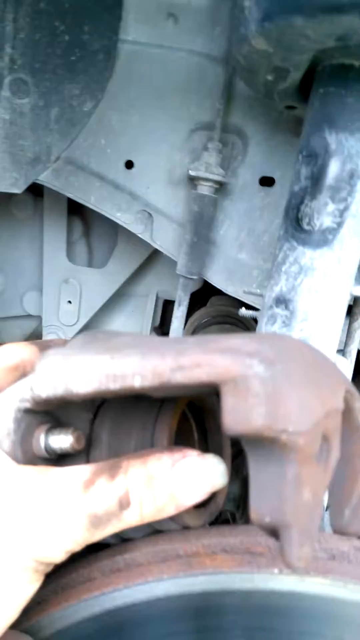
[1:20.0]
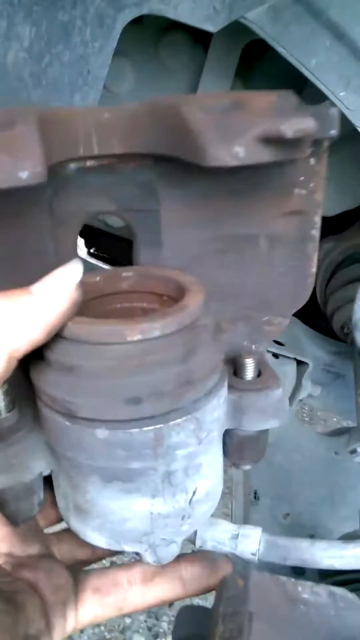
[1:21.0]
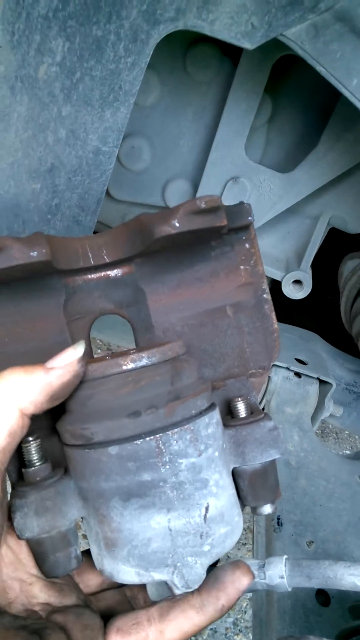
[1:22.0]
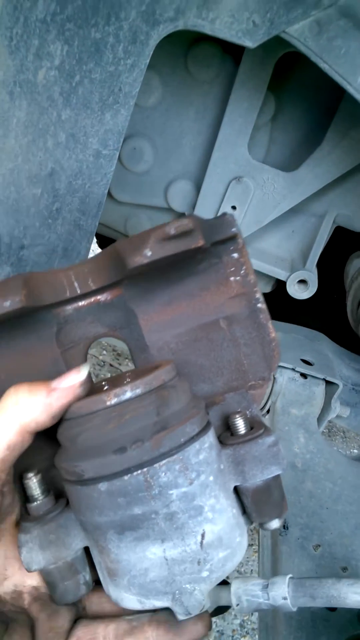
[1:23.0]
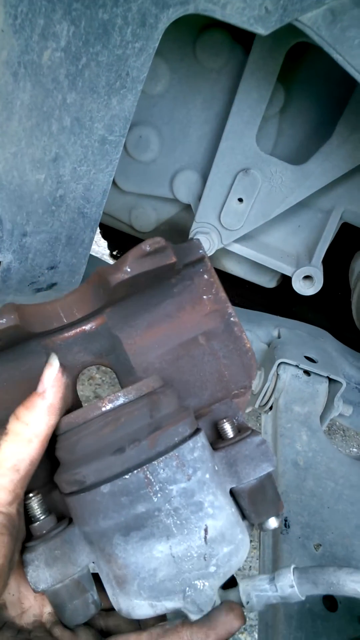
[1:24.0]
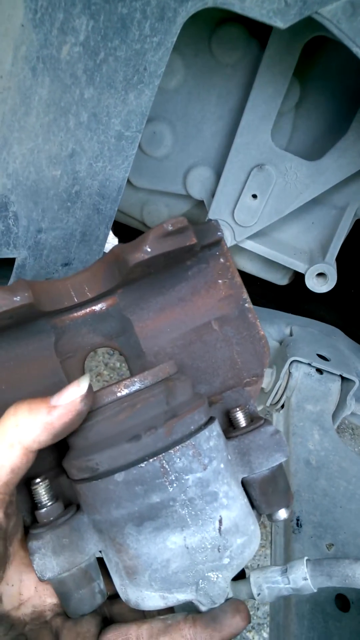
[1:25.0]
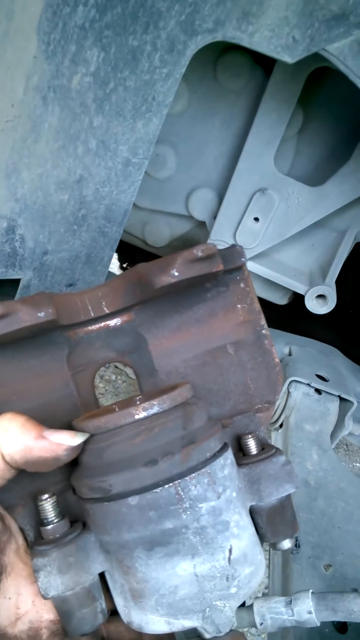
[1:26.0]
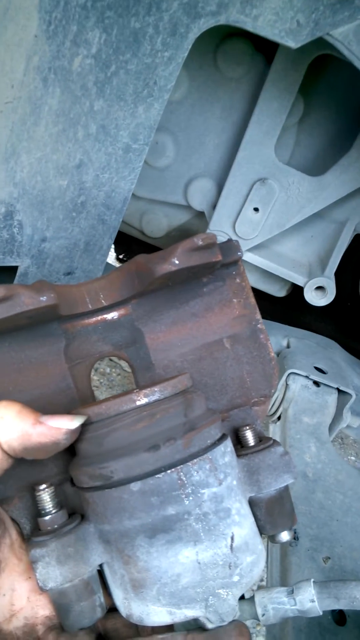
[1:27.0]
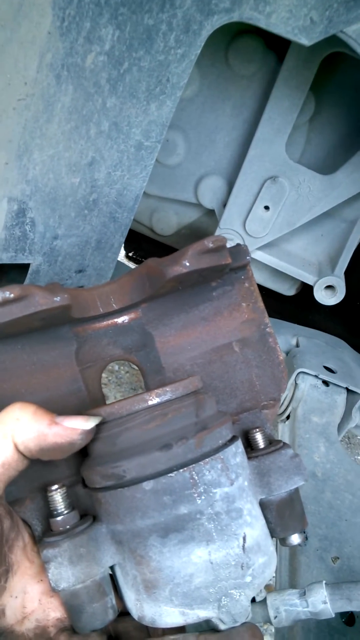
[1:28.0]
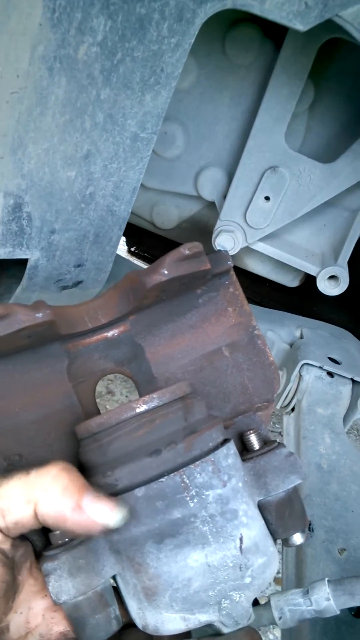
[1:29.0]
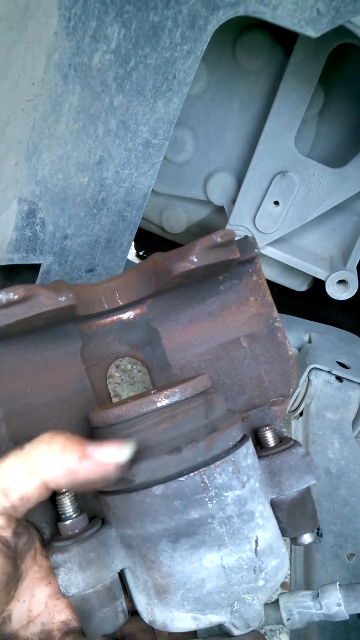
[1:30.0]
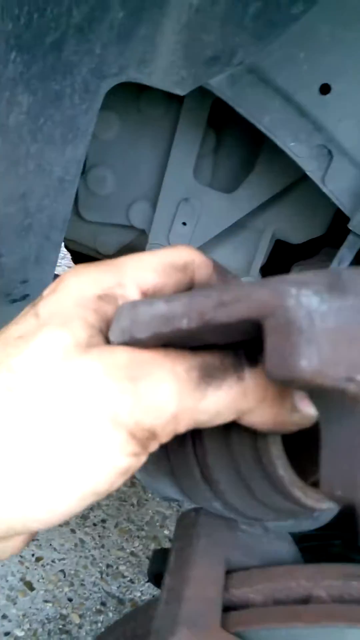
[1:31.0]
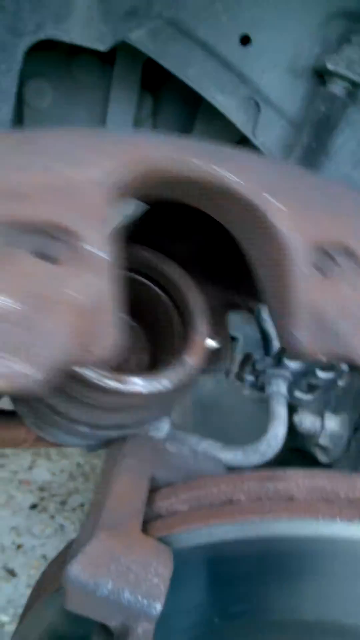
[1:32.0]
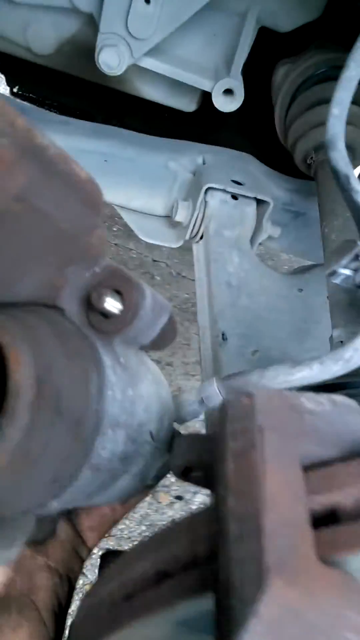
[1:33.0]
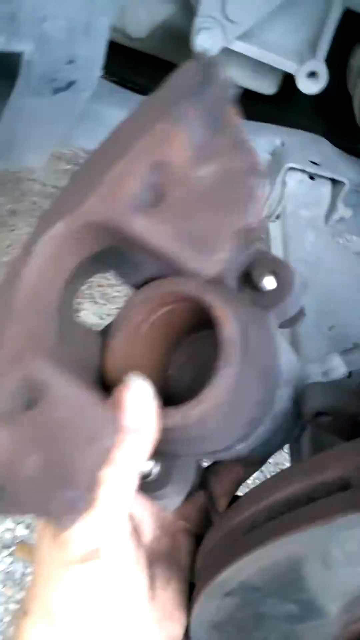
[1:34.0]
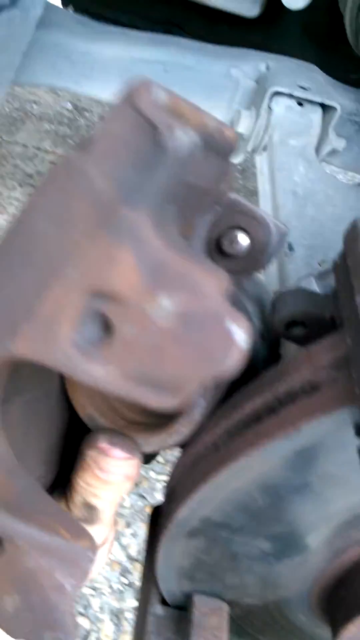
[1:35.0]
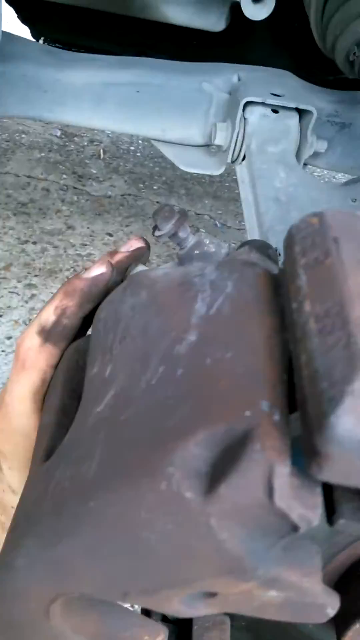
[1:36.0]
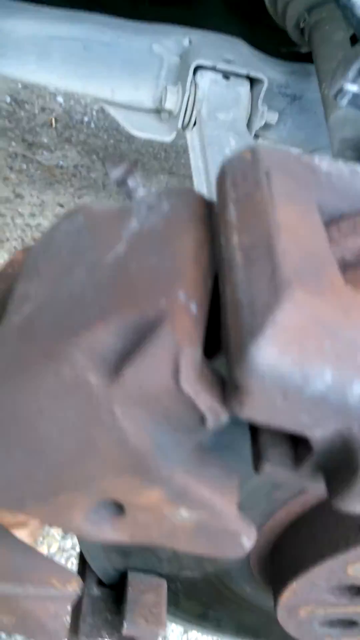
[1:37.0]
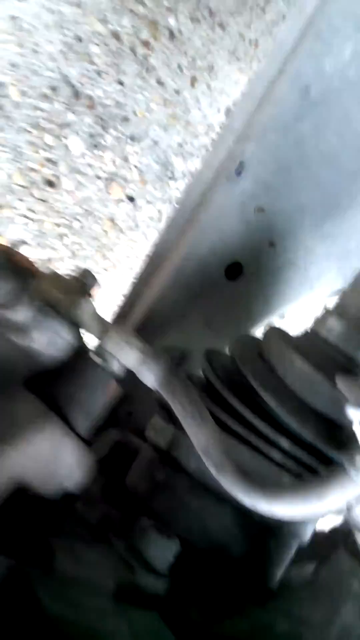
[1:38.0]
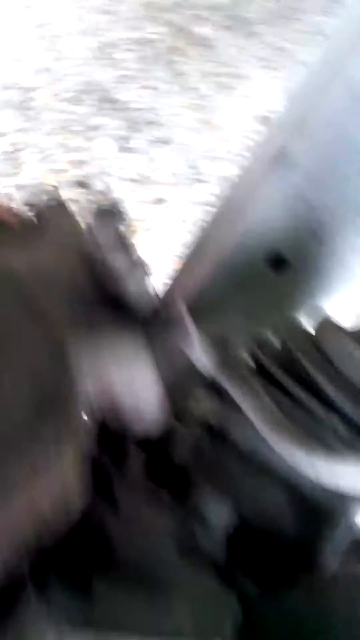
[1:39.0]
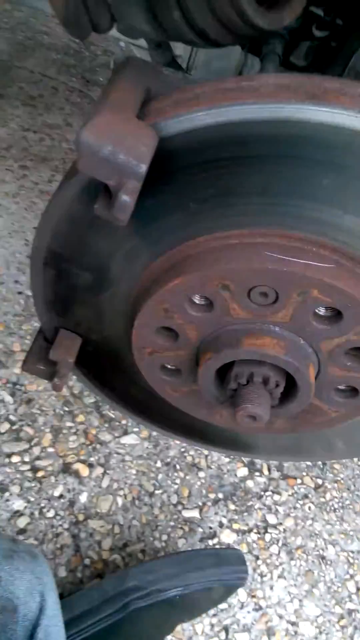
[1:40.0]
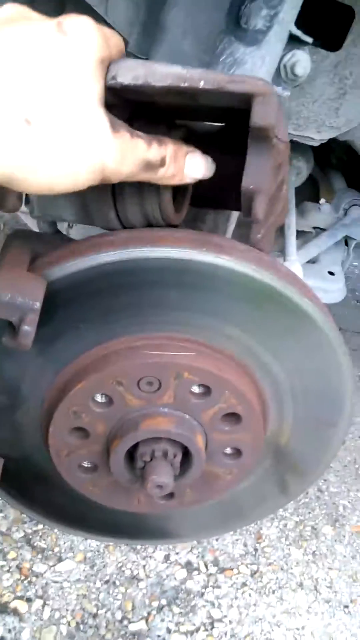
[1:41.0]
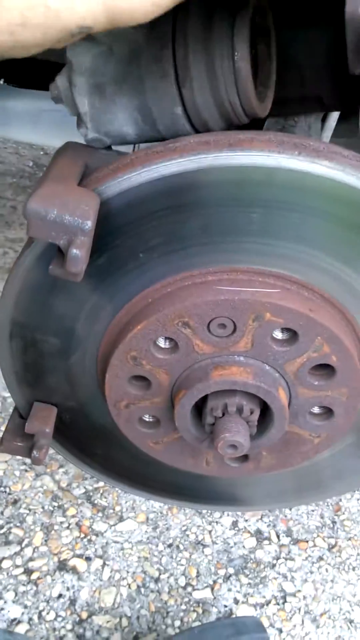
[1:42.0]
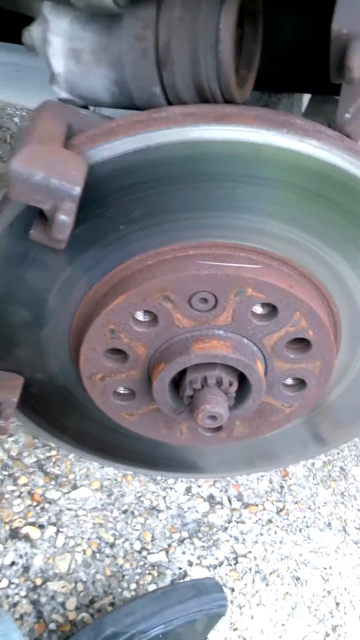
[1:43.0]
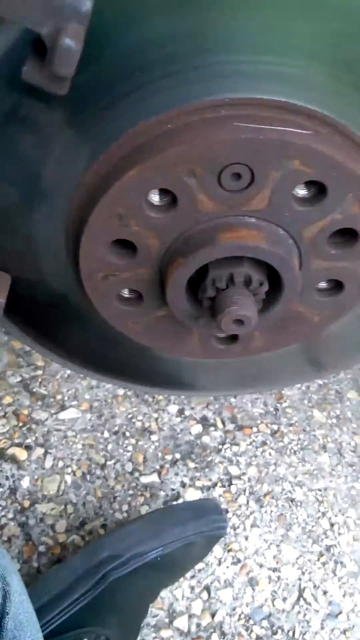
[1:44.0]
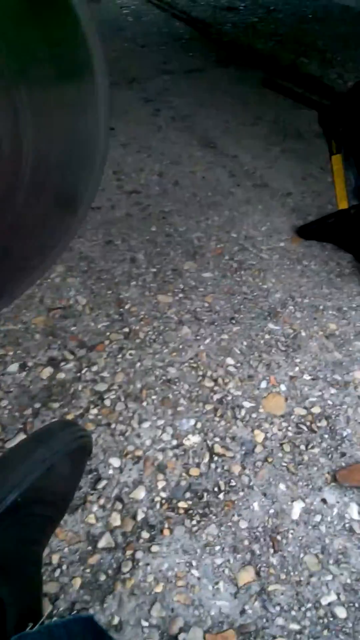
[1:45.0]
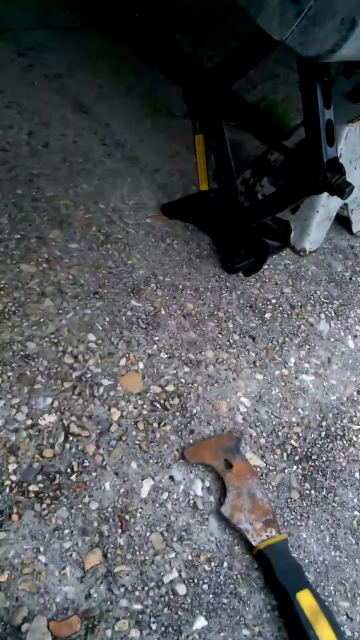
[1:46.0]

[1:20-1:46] A close-up shows some rusty metal objects. In the background are various sheets of silver metal with holes in them, and there seems to be some sort of taut pulley thing as well. In the foreground is what looks almost like a spring-type tube with kind of rusty metal casing. It has a pipe attached to it, held on with a metal holder, and some nuts and bolts on its inner side. The man holds it in his left hand with his thumb just in shot; he has a very long thumbnail and his hands are covered in oil. He uses his thumb to point out sections of the piece of equipment, then places it back onto the silver disc. The camera moves around a lot and is quite shaky. His feet come into the shot: he wears black, sort of plimsoll-type trainers and jeans, and he appears to be sat cross-legged on the floor.